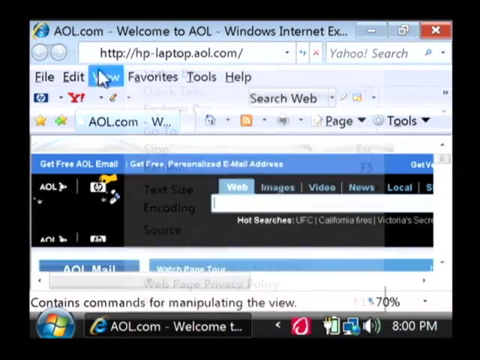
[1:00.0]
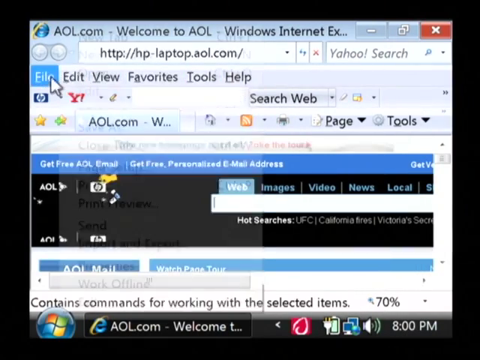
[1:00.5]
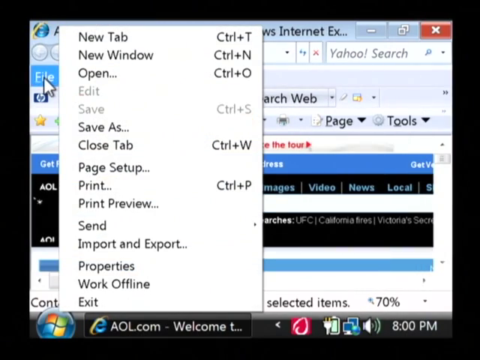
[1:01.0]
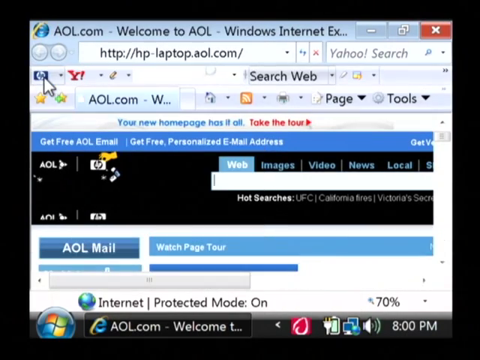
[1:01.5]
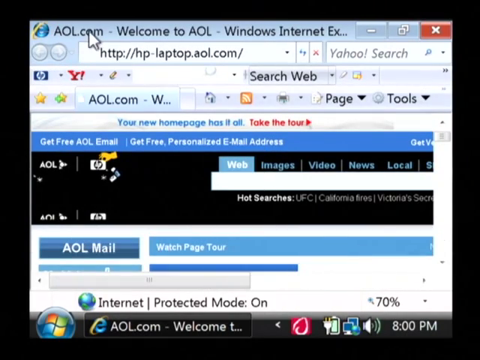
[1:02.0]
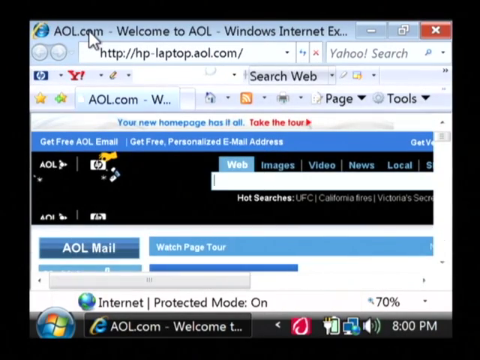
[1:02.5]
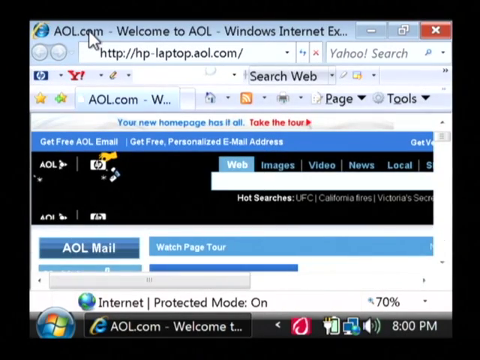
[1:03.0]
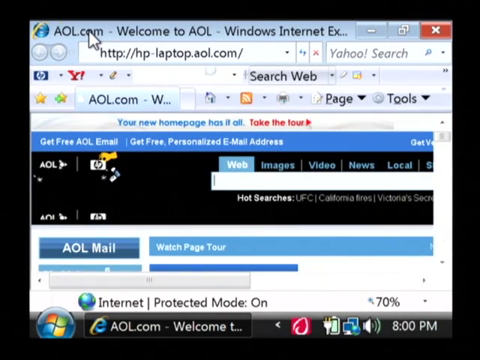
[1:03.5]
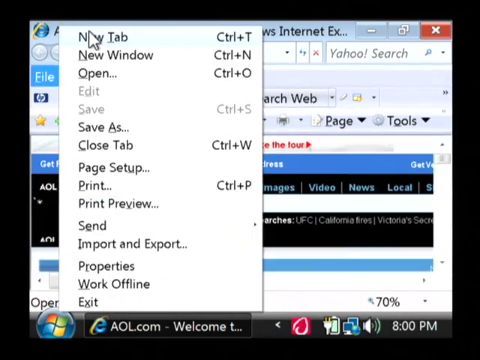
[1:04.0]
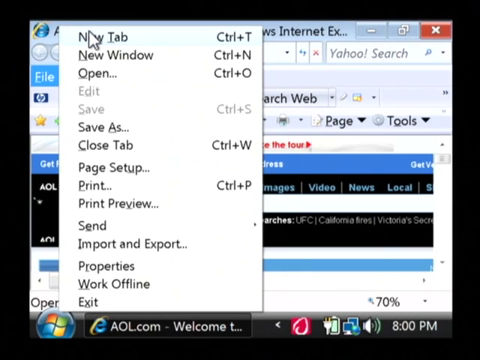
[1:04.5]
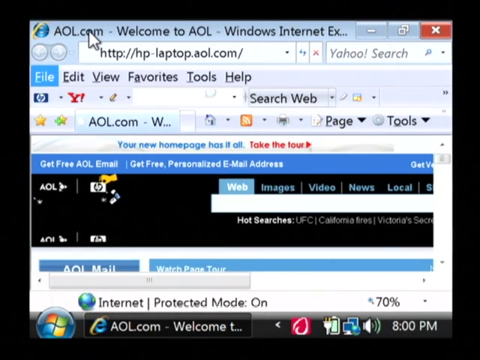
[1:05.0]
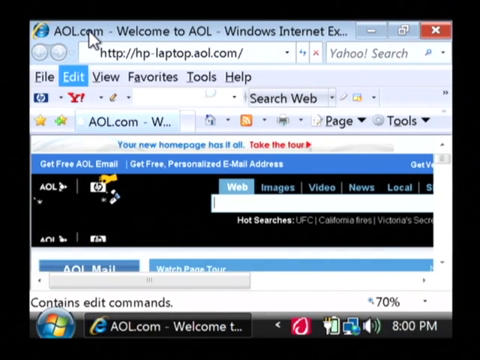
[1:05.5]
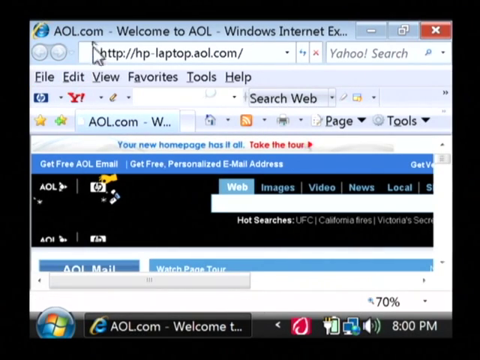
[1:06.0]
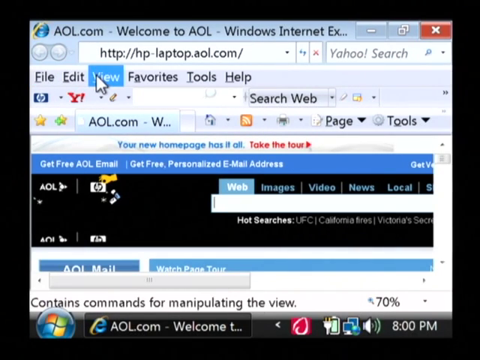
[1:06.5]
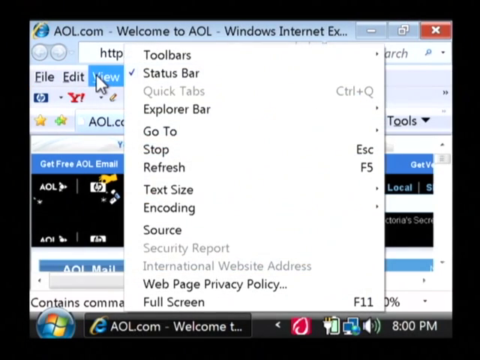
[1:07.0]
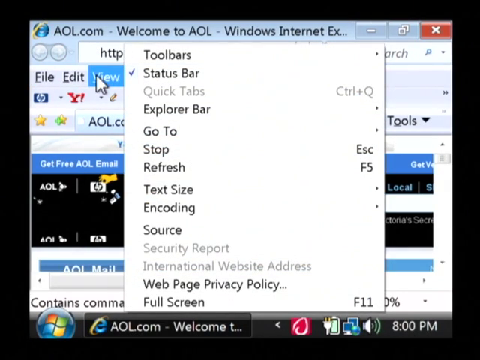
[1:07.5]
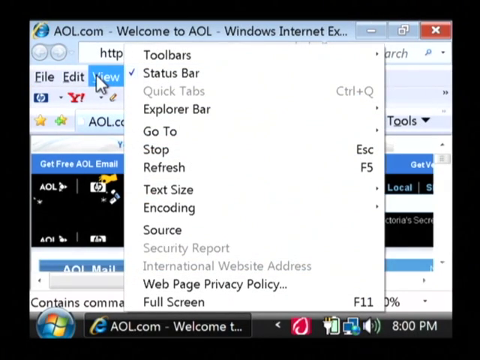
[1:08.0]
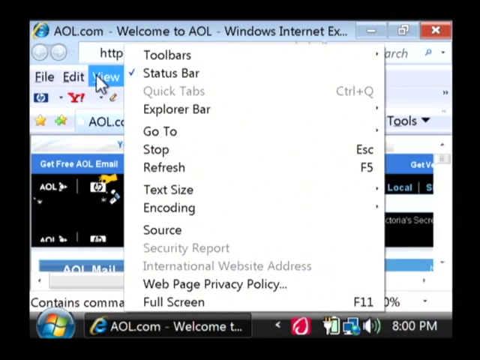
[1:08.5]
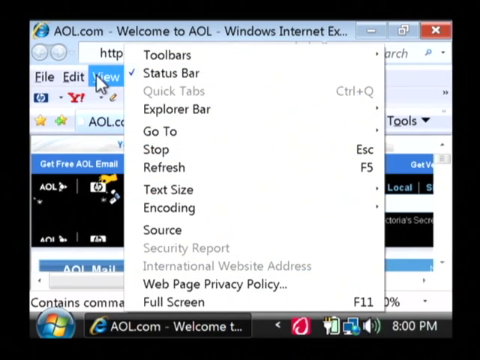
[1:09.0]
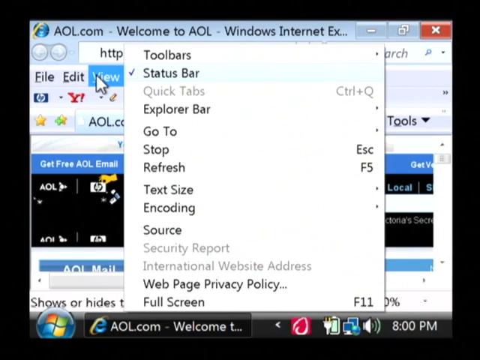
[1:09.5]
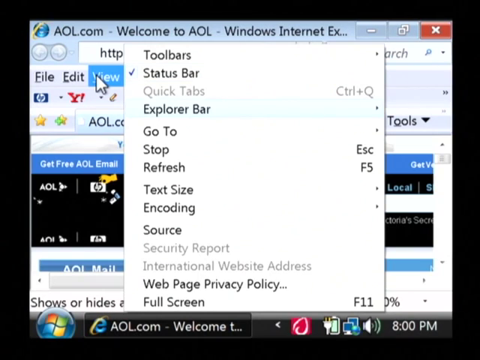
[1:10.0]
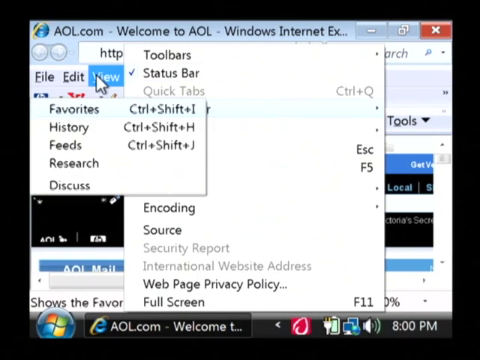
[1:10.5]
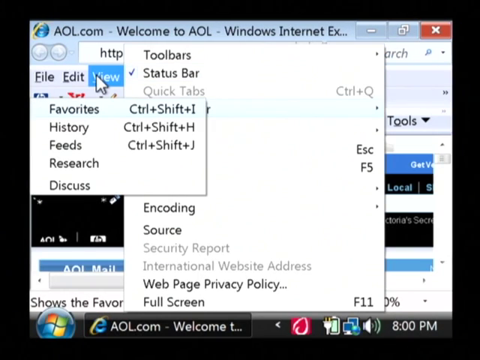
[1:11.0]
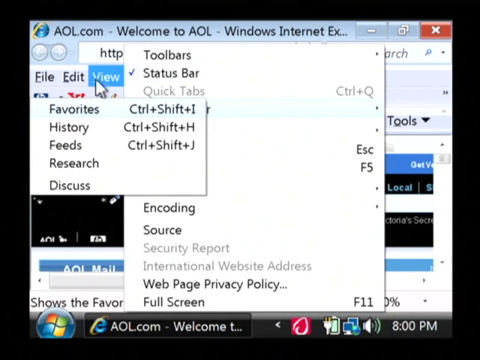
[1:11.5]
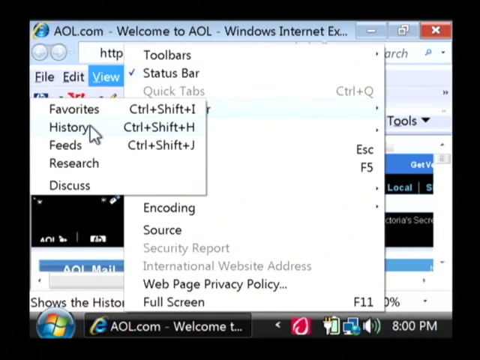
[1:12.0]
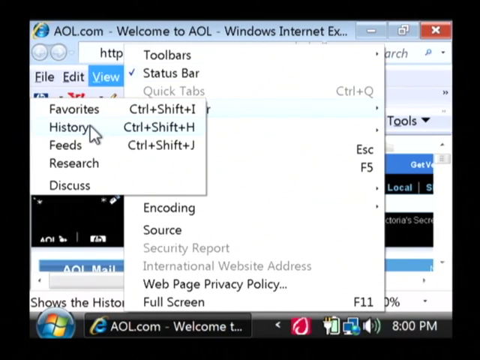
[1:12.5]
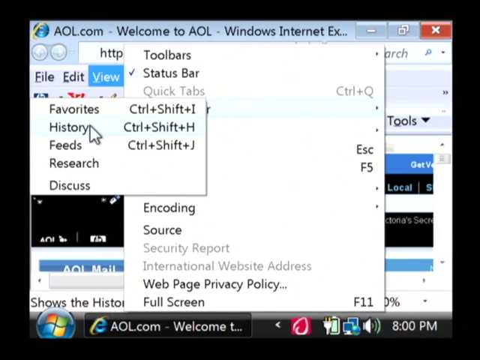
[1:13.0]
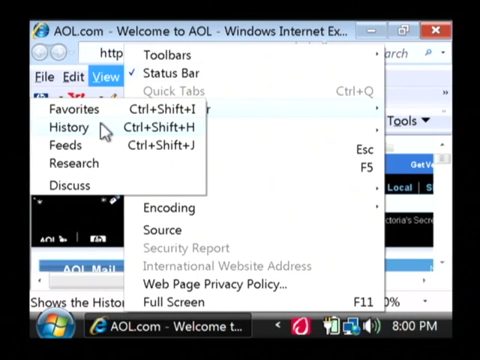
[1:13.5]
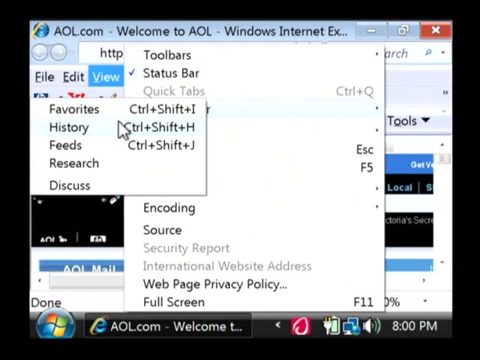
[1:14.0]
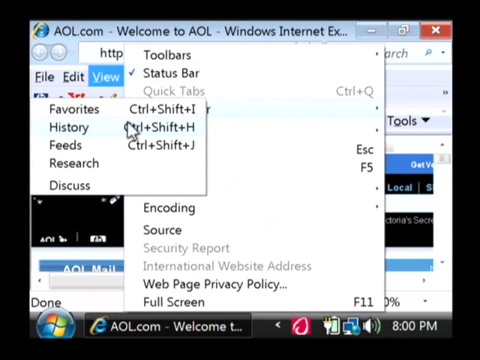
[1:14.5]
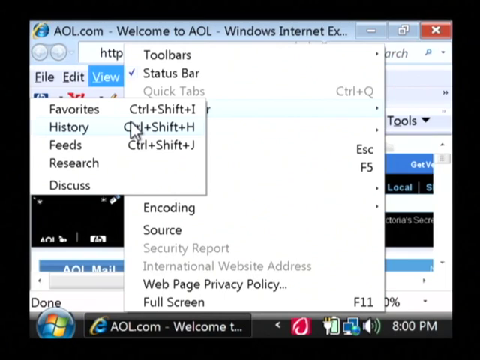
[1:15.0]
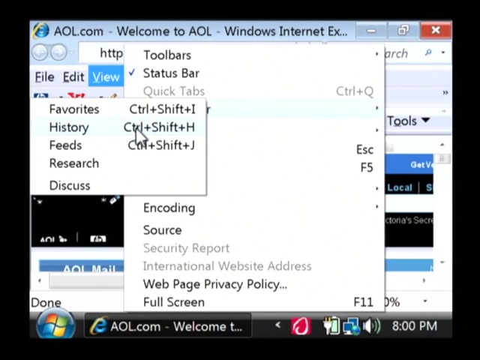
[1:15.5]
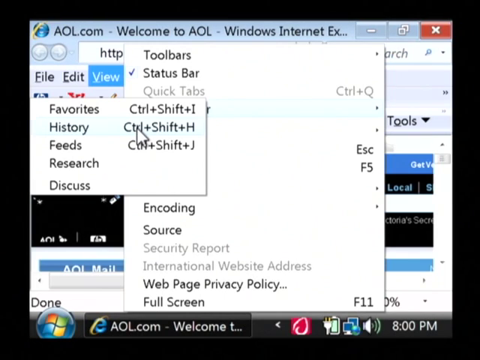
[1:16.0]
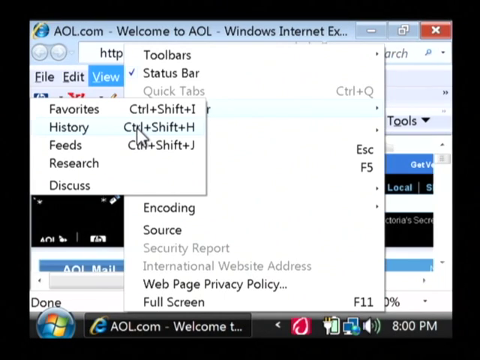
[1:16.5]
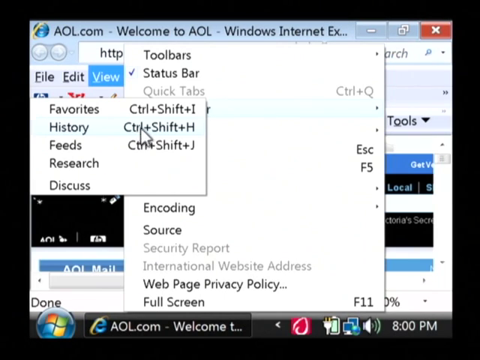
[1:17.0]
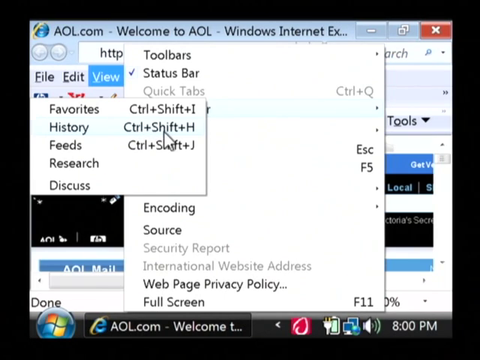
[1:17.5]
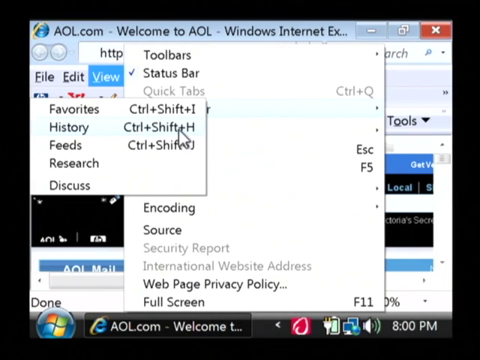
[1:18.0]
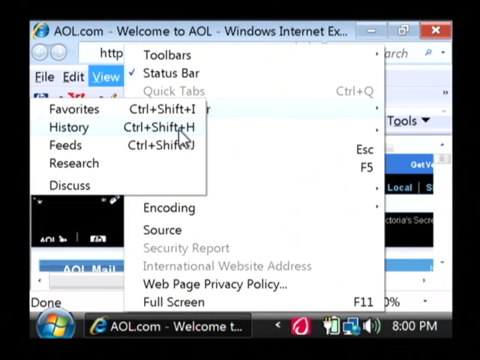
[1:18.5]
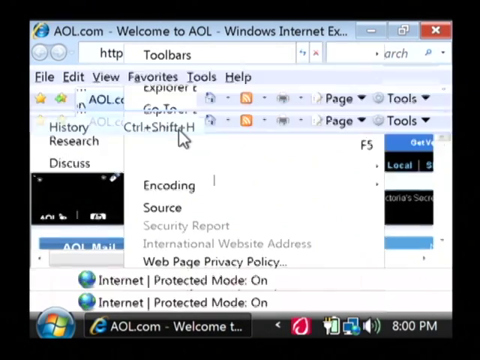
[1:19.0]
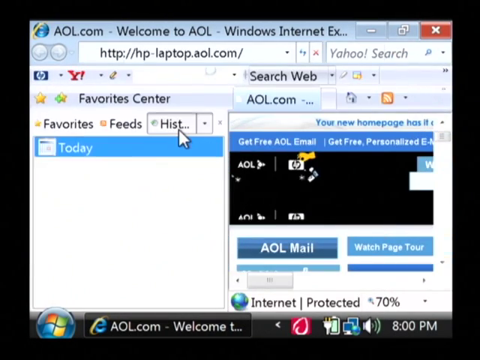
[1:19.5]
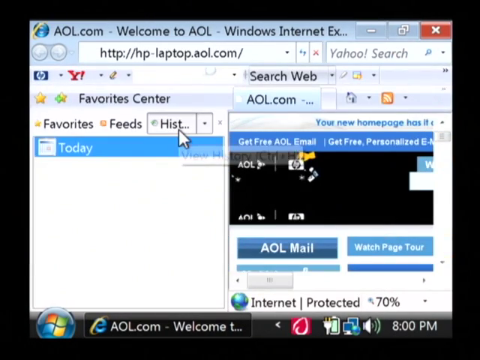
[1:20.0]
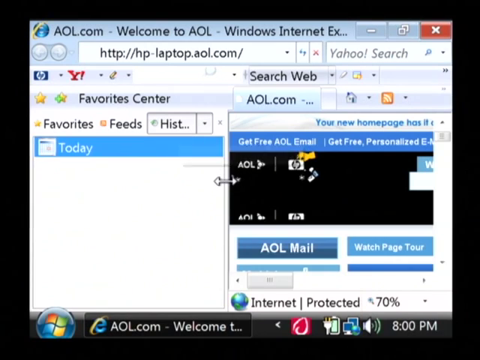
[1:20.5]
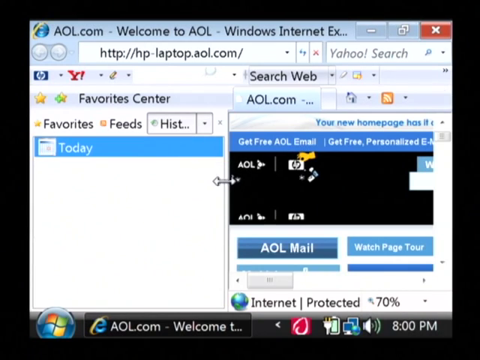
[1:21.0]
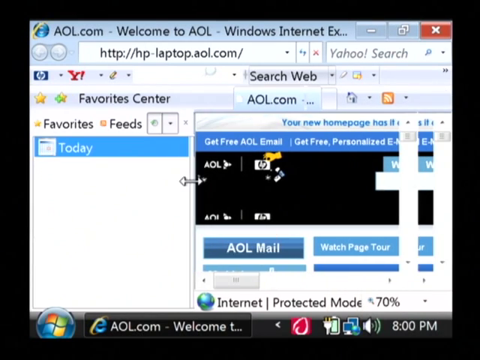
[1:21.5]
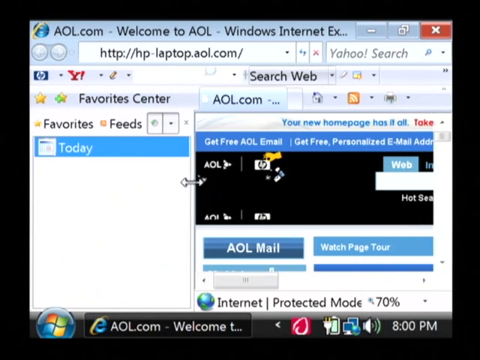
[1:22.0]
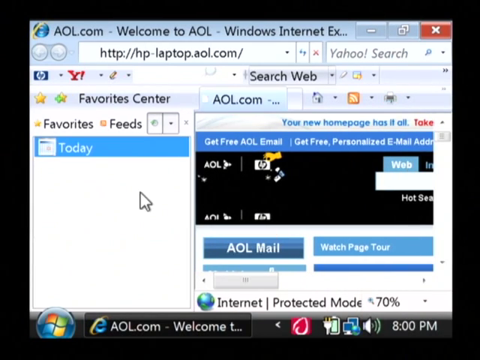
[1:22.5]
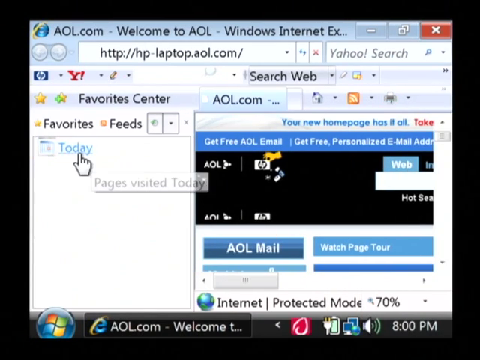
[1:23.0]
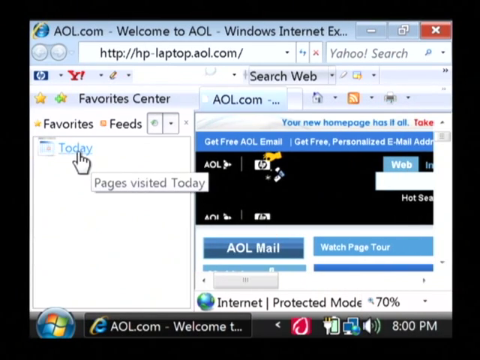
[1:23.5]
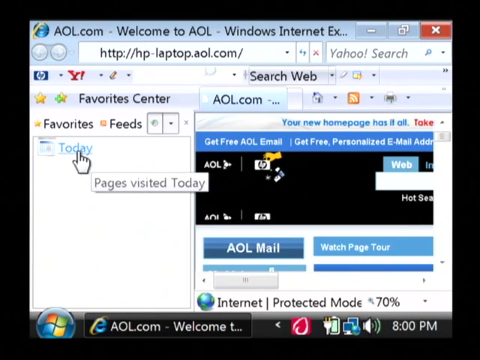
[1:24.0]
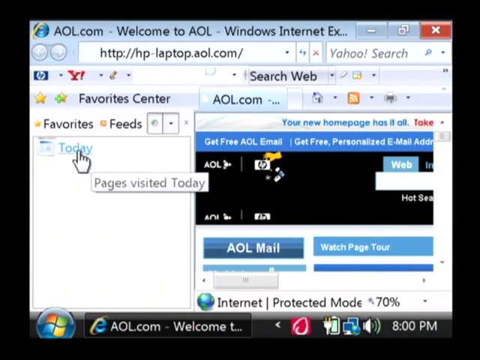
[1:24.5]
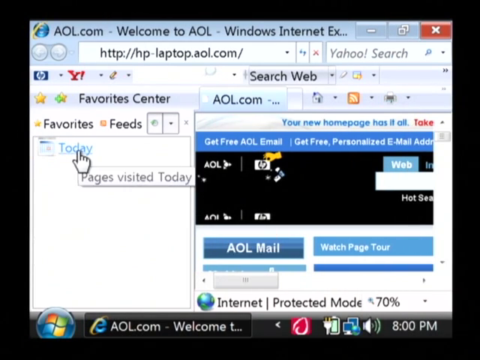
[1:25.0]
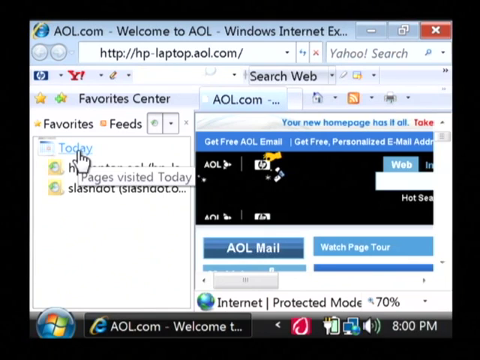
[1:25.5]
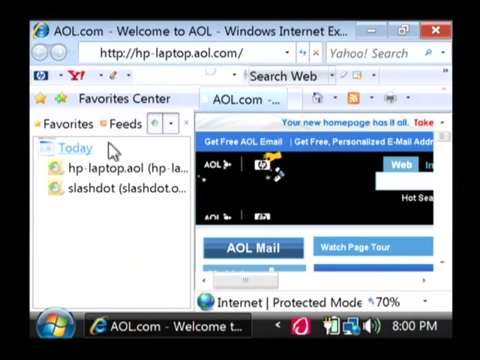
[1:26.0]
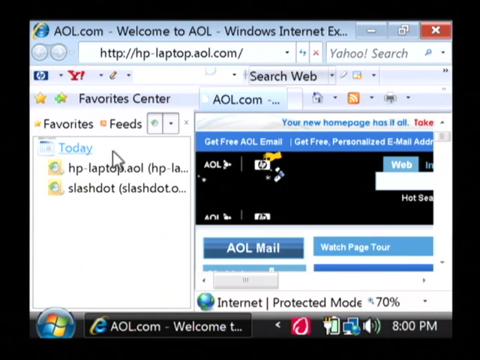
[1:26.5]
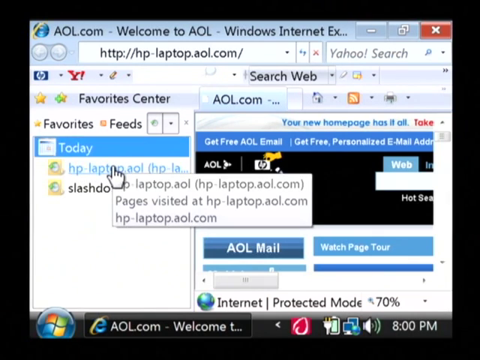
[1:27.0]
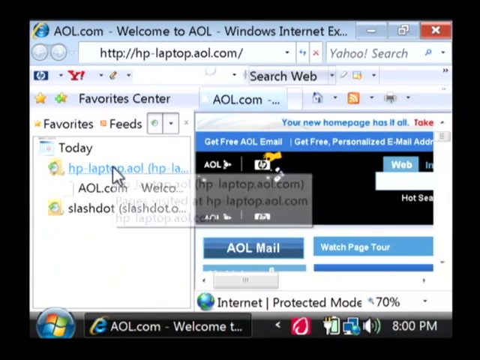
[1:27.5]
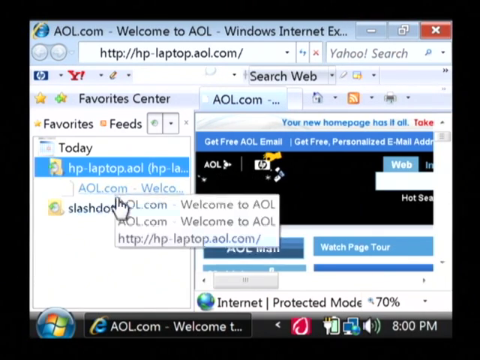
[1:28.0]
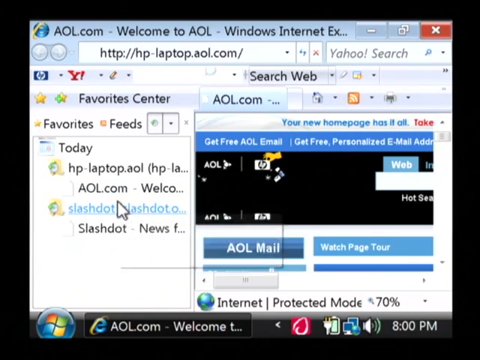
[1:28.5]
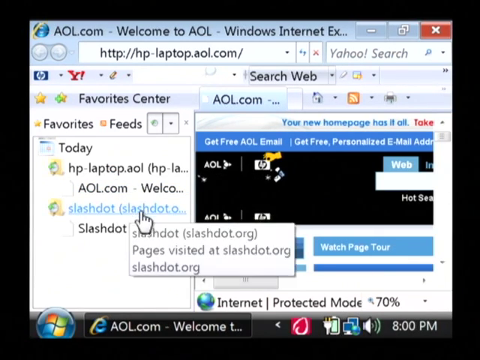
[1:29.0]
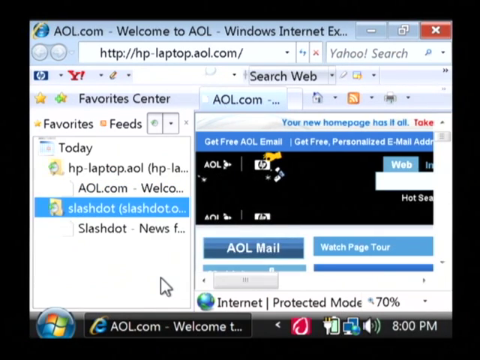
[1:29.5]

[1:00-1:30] The Internet Explorer browser is shown, and the user opens the menu bar again, moving from File to Edit to View. He then goes over to History, highlighting the letters of the shortcut keys Control Shift H on the screen, and finally clicks on History, which shows what was viewed today. The list scrolls down to show the other web pages visited today. This section seems to cover browser history, apparently as part of a demo of Internet Explorer and its settings.